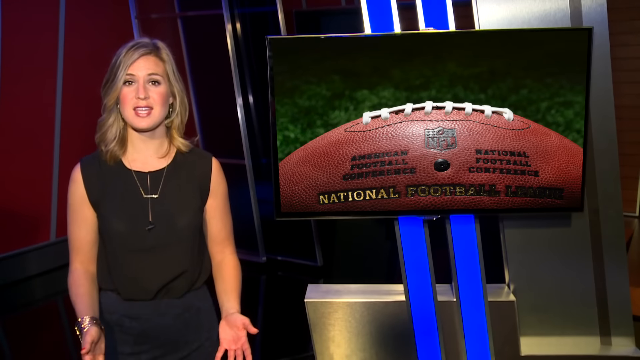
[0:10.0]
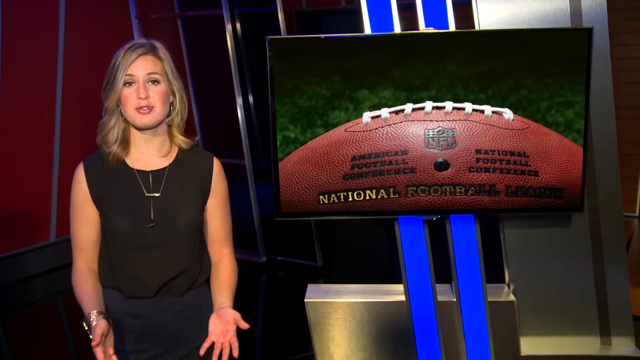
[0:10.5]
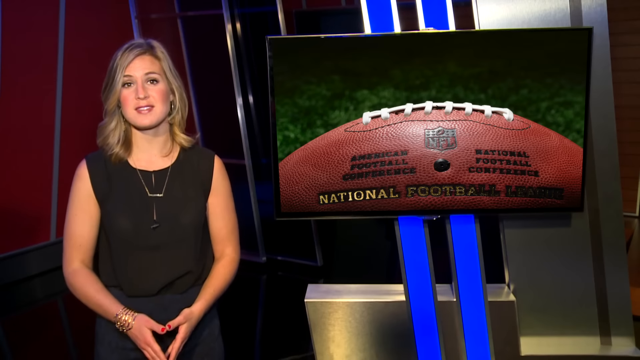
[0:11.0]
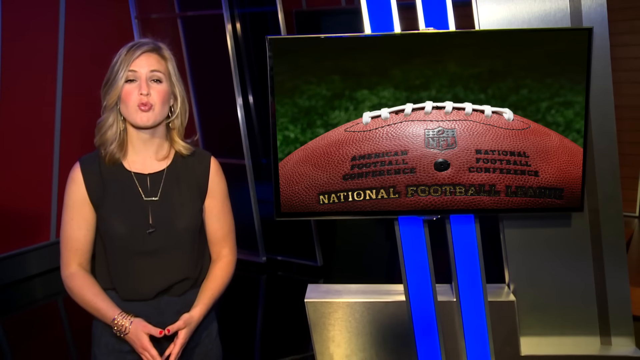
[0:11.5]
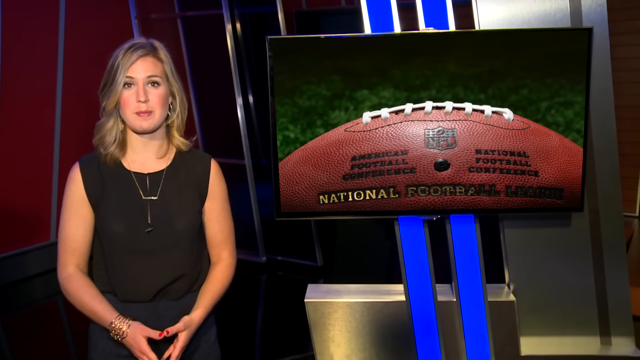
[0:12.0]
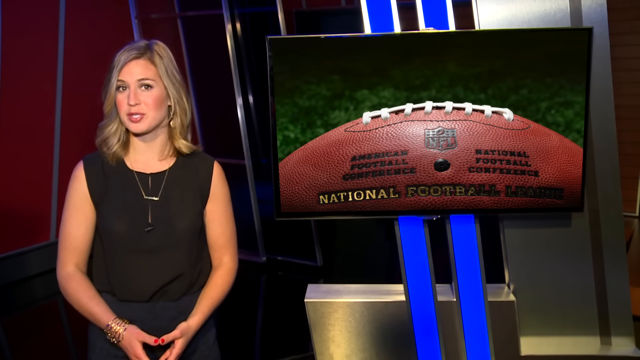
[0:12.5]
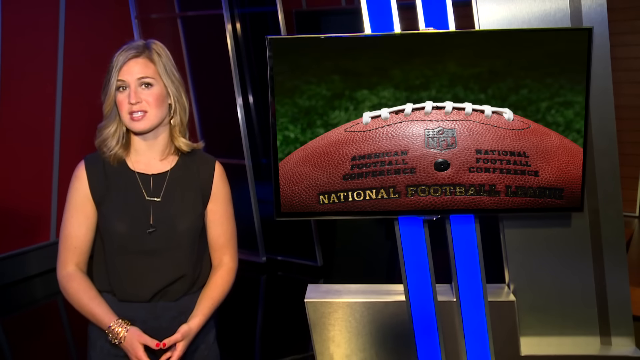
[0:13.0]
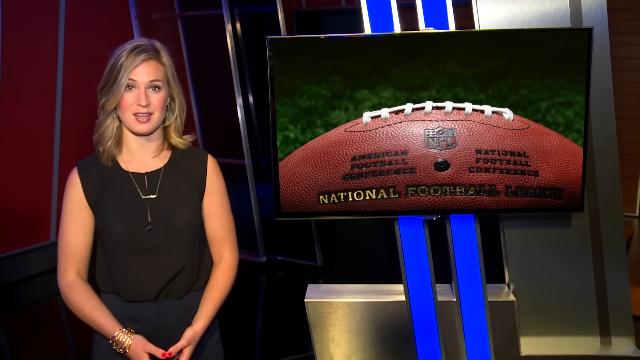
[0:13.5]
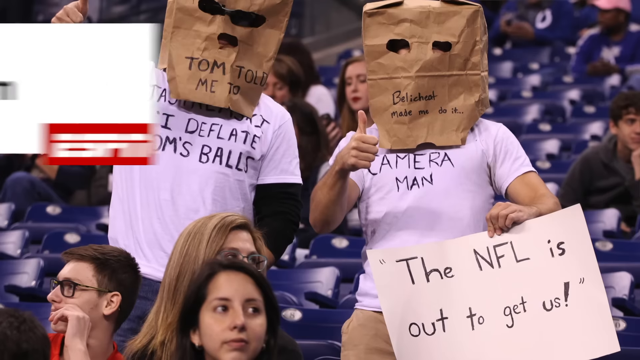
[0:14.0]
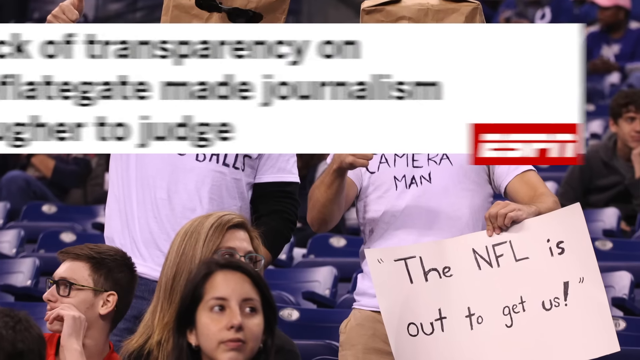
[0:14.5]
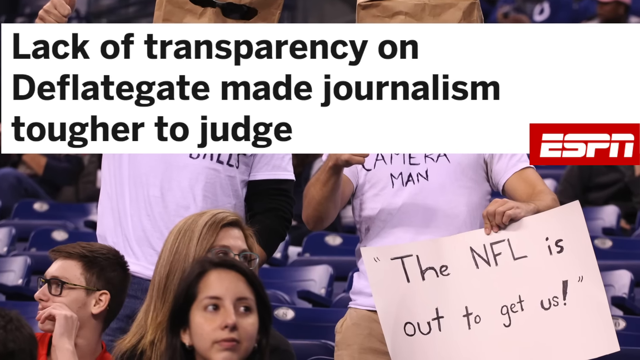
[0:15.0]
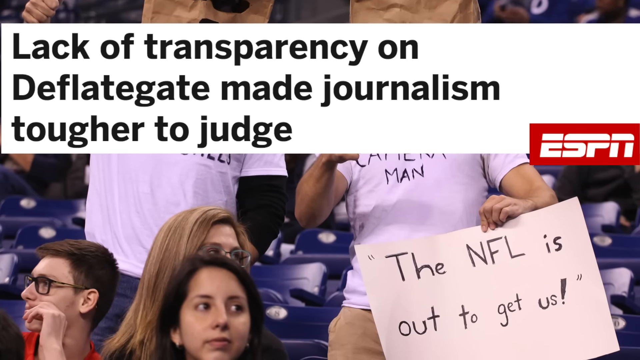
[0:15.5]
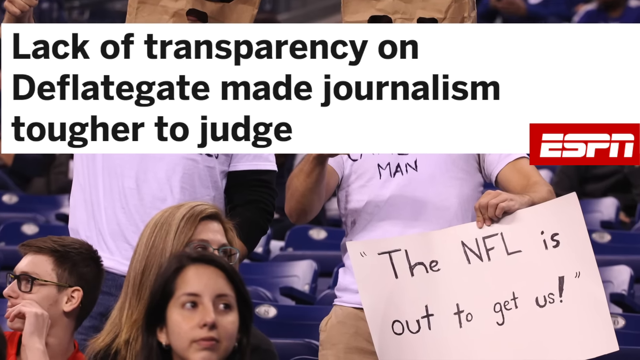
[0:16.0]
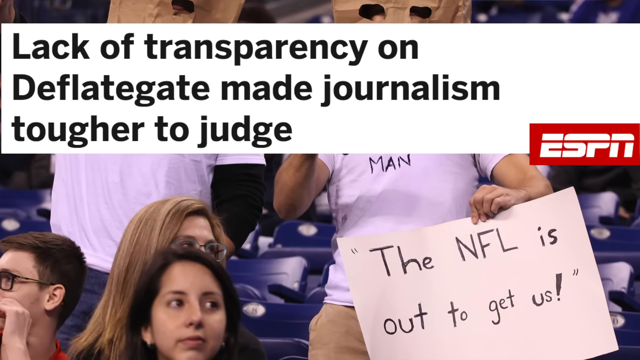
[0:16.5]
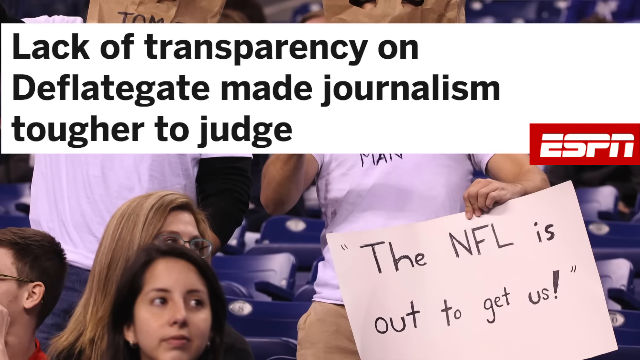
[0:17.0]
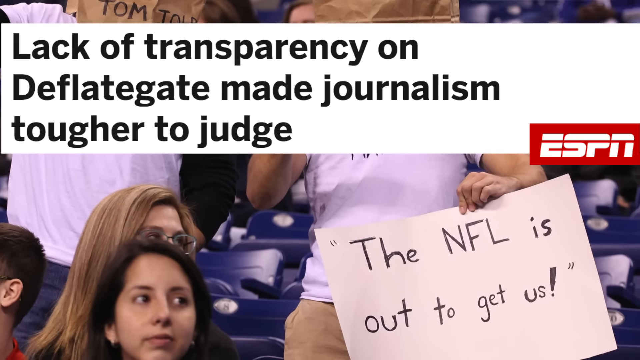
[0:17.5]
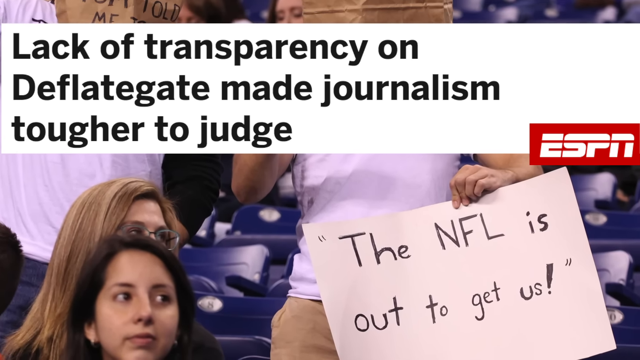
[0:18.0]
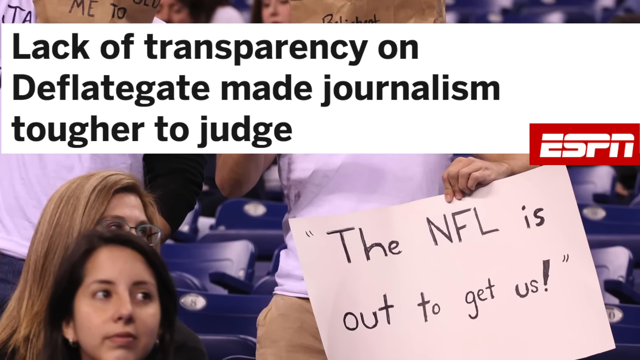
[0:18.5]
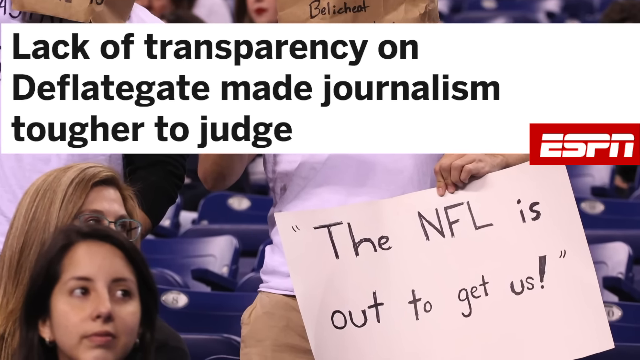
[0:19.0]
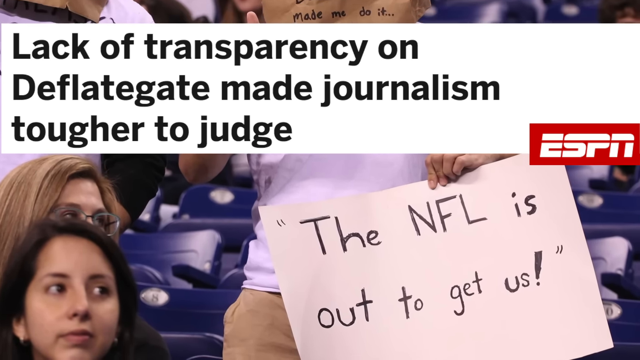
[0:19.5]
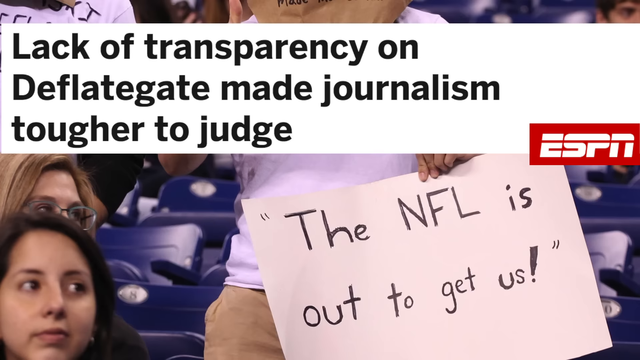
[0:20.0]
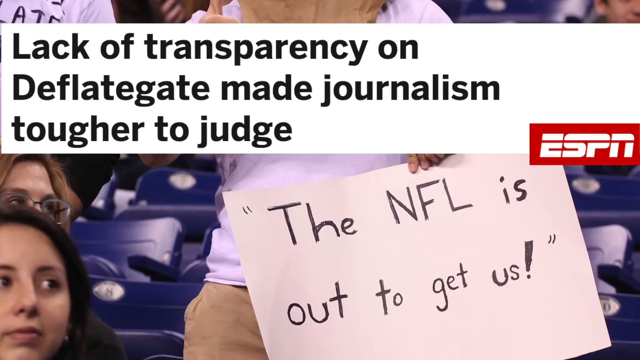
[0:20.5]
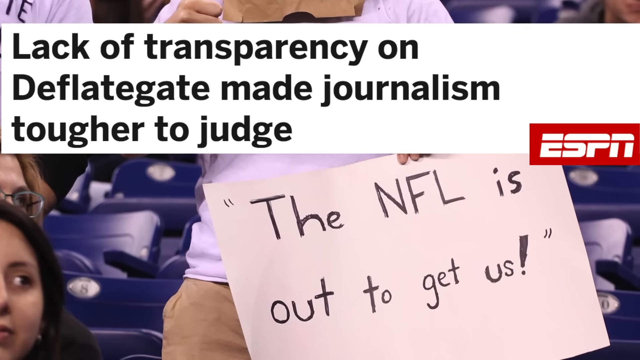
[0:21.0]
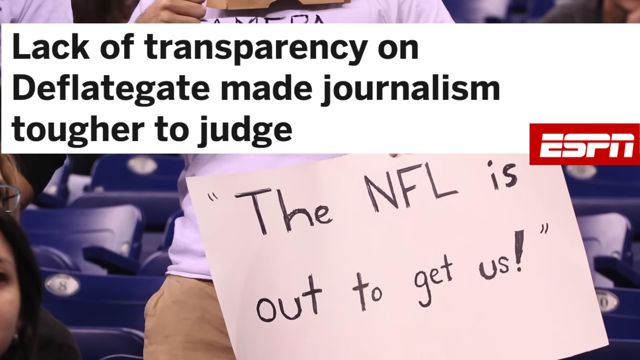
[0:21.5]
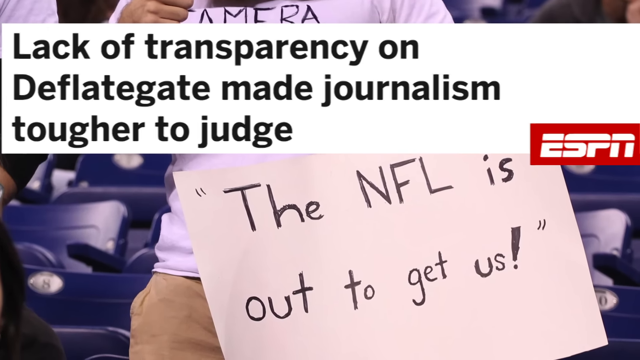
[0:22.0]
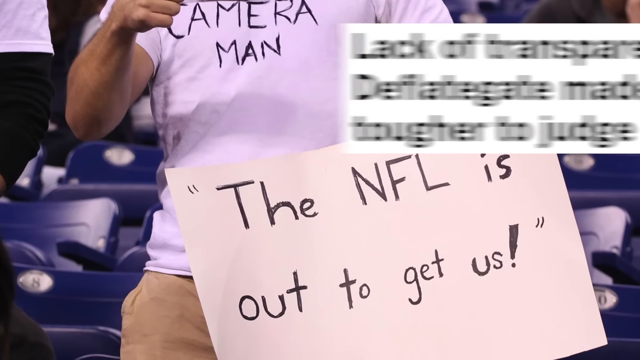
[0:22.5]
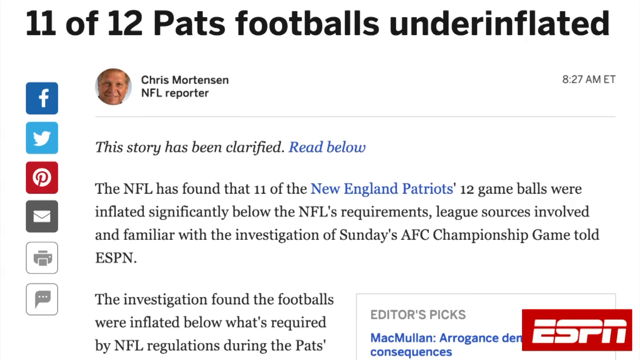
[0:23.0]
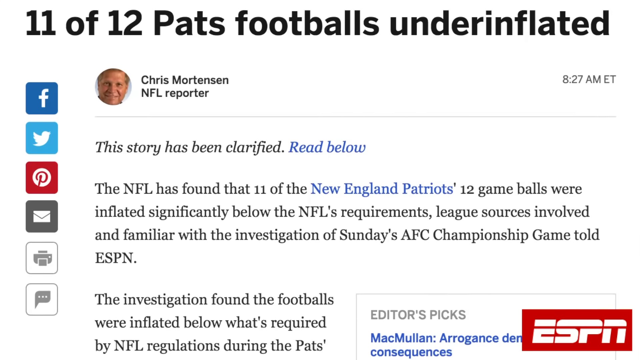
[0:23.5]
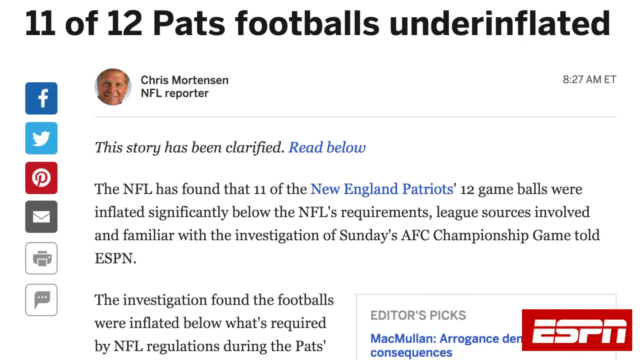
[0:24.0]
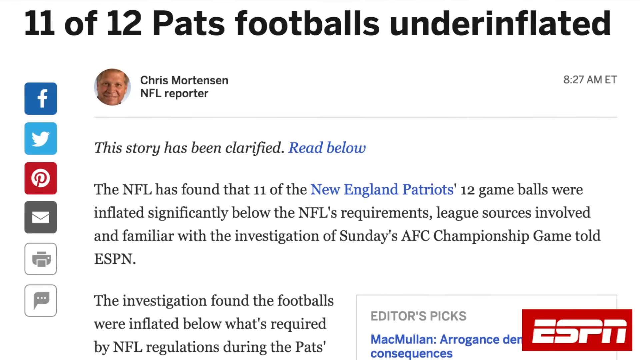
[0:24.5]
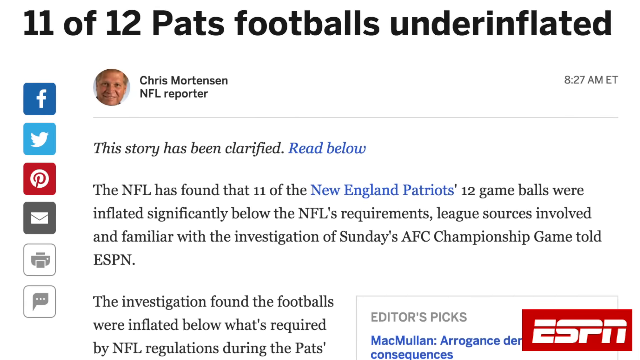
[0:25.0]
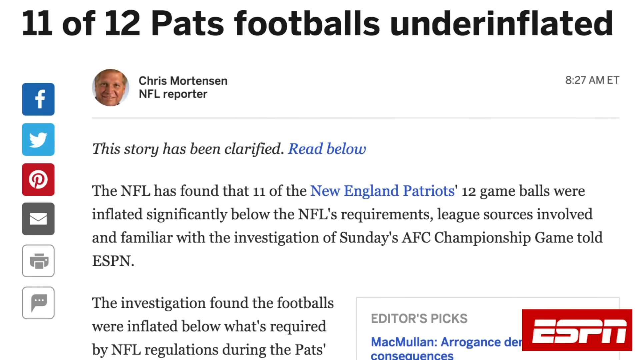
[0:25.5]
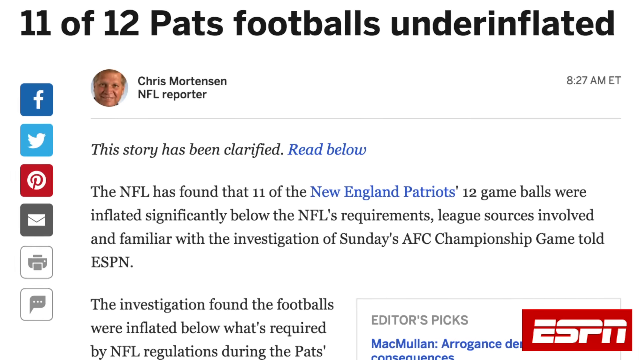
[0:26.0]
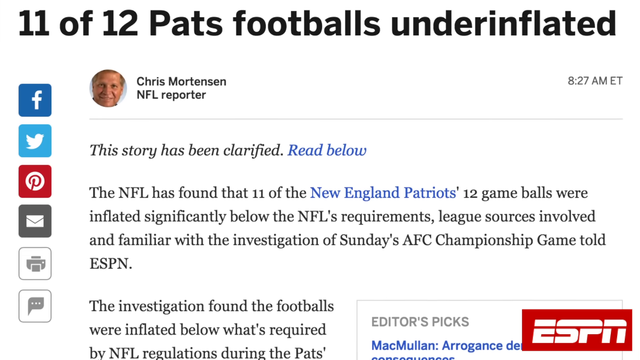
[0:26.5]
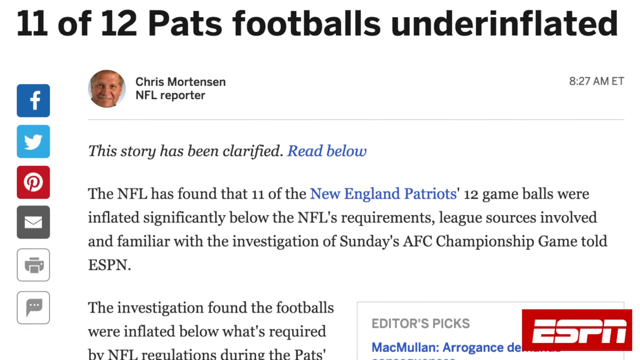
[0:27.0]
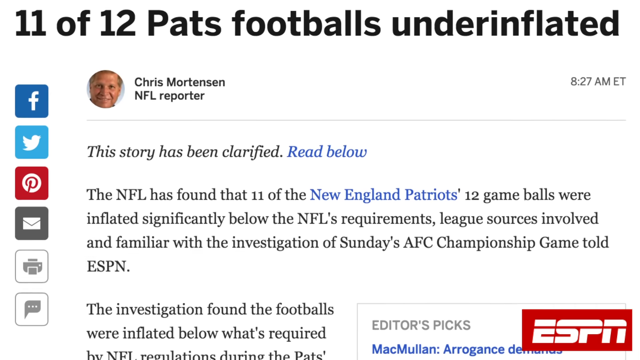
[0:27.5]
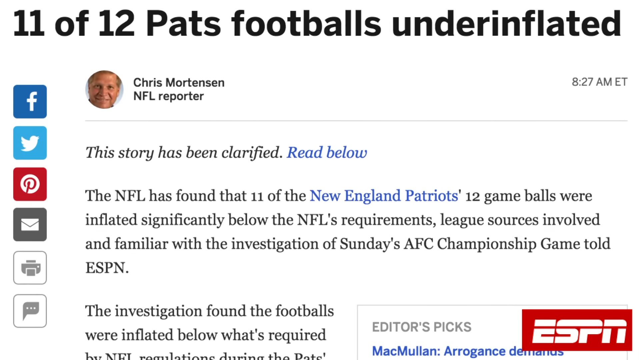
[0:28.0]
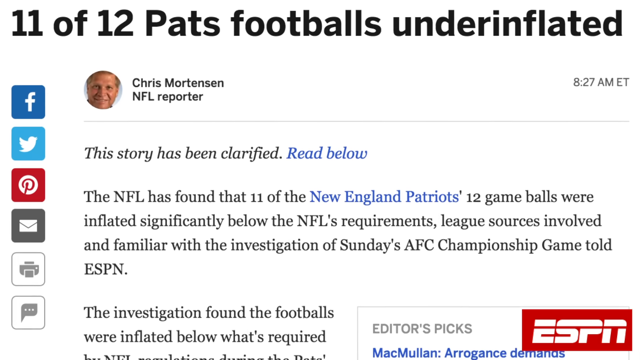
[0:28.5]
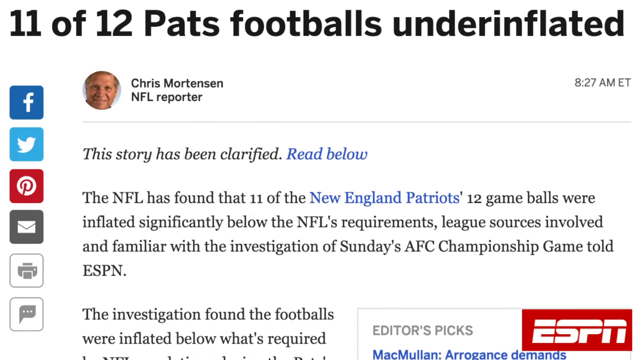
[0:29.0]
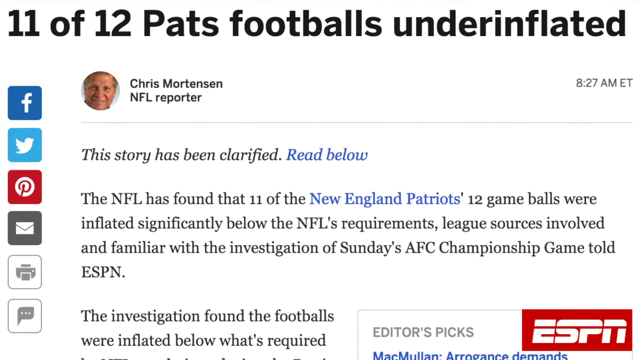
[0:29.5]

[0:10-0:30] A blonde news anchor wearing a necklace and a black sleeveless dress presents news about the deflategate. On her left, a screen shows an image of a football. The image then transitions to a picture of two football supporters, saying that lack of transparency has made the journalism tougher to judge. The two fans wear white t-shirts with "camera man" written on them, and the camera zooms in on the poster one of them has, which says "the NFL is out to get us". Next, the video transitions to a news story from Chris Mortensen about the same case, written at 8.27am Eastern Time. It states that the NFL found several of the New England Patriots game balls were inflated below the NFL requirements, which caused an investigation. On the left are shortcuts to social media platforms for sharing the news.